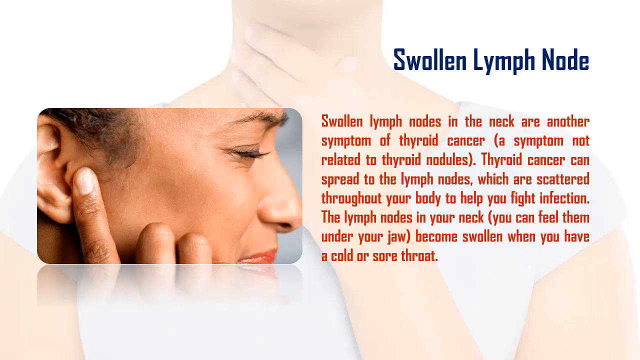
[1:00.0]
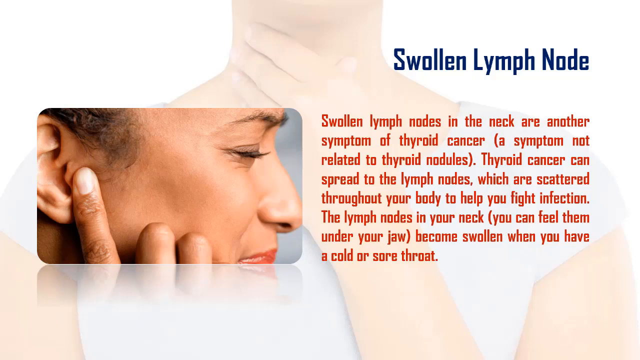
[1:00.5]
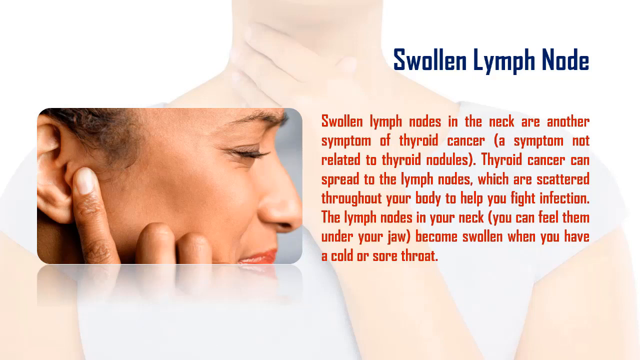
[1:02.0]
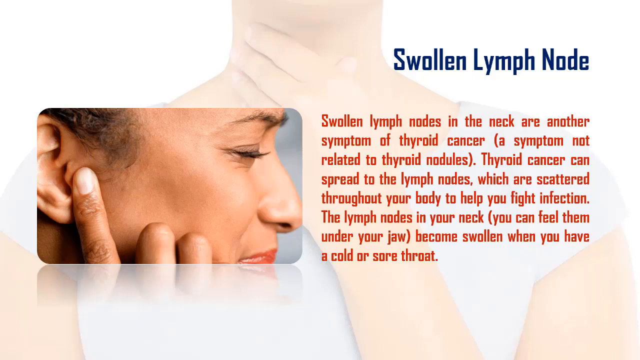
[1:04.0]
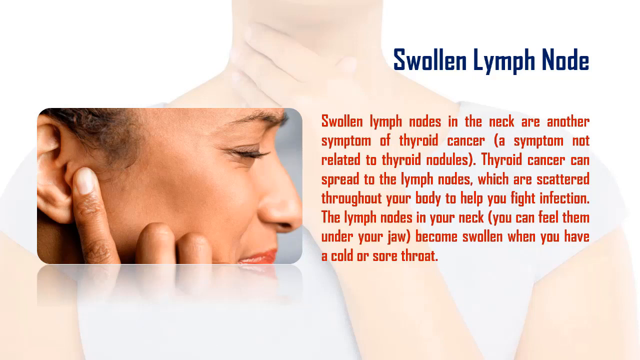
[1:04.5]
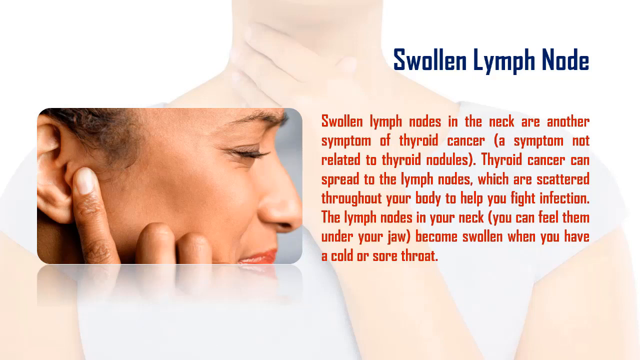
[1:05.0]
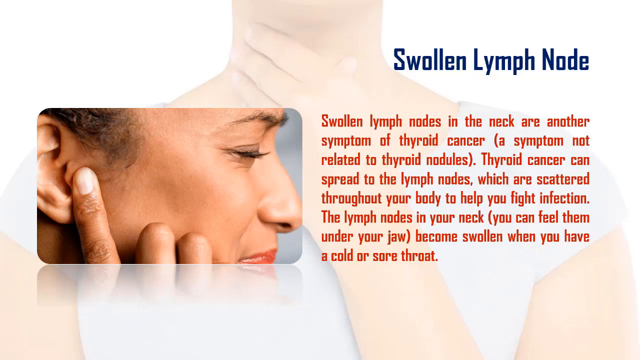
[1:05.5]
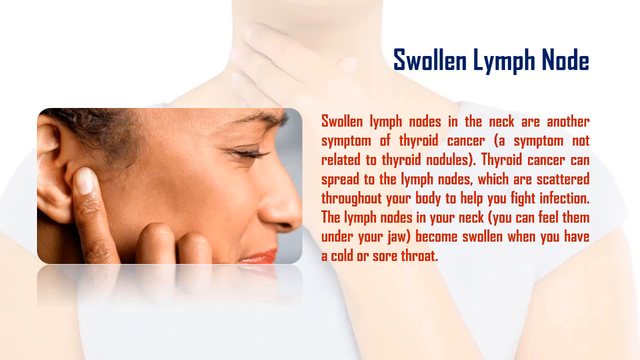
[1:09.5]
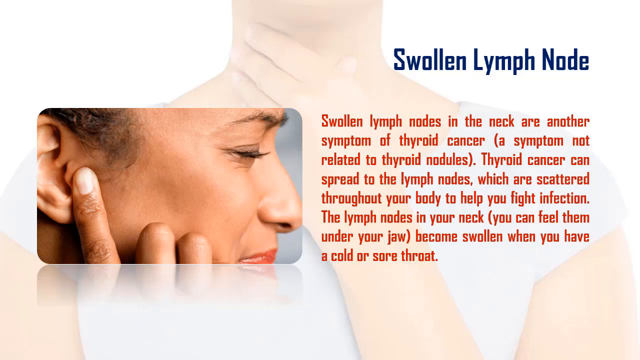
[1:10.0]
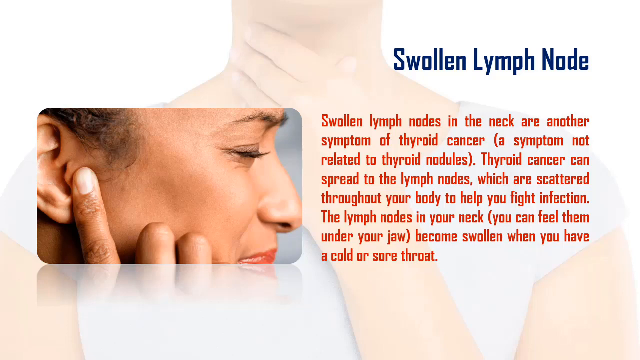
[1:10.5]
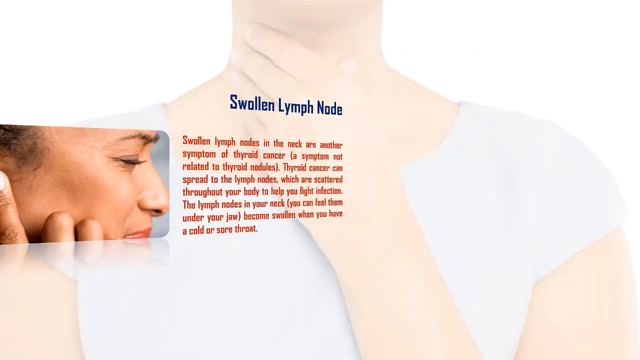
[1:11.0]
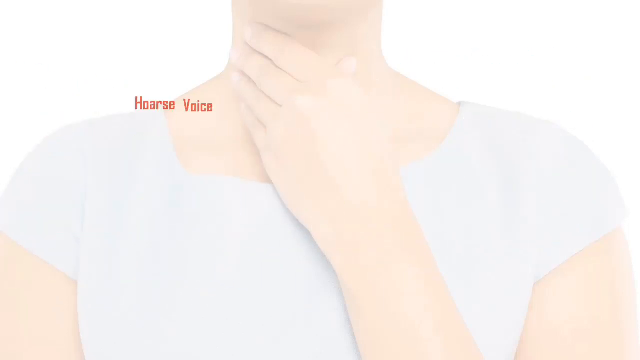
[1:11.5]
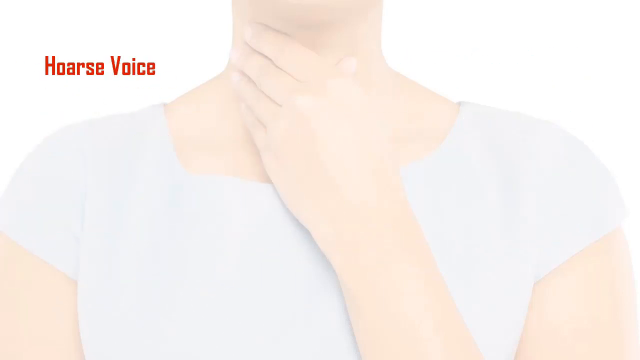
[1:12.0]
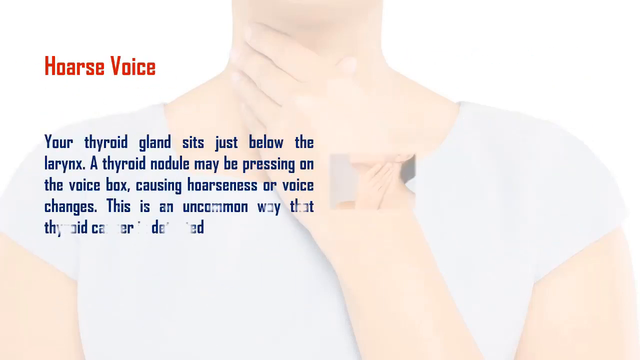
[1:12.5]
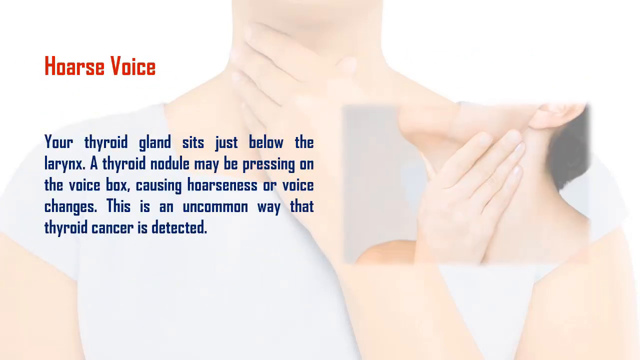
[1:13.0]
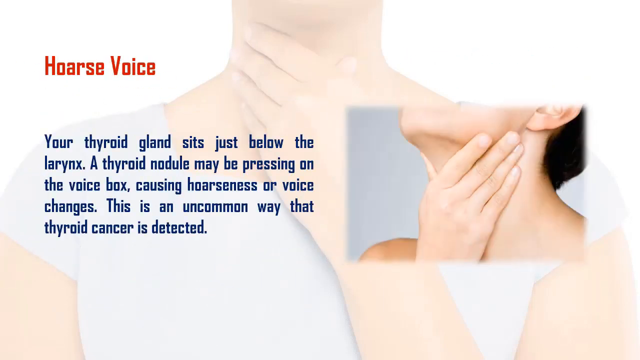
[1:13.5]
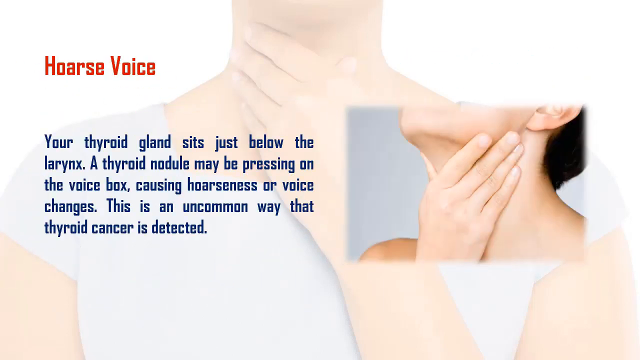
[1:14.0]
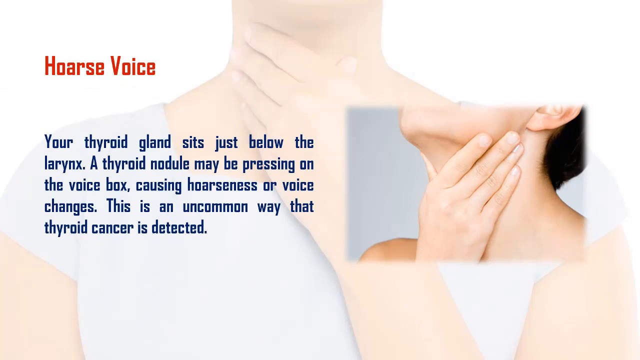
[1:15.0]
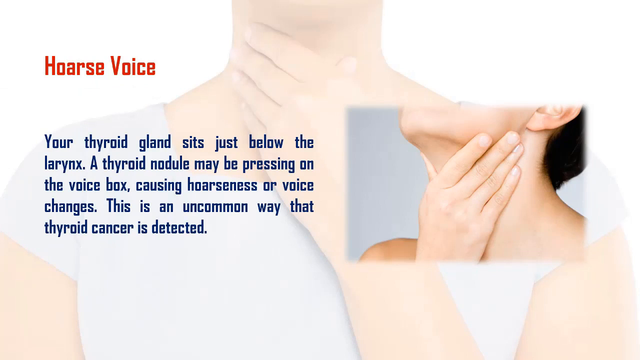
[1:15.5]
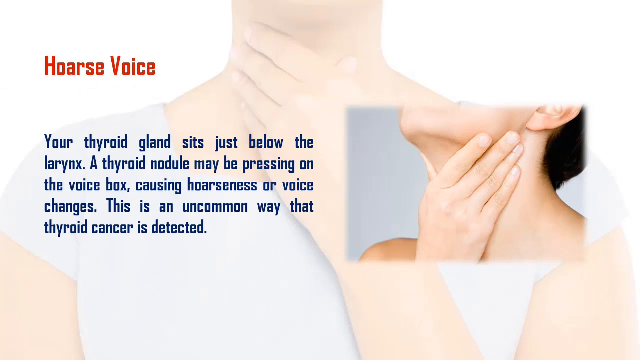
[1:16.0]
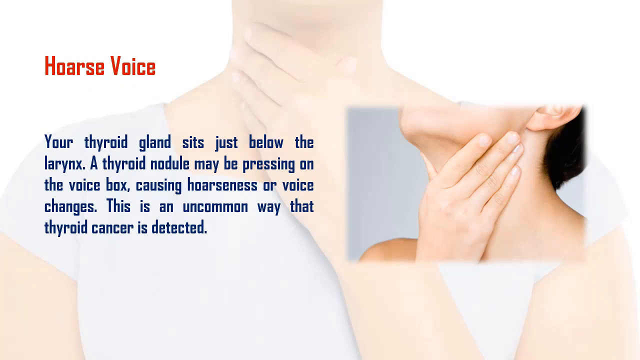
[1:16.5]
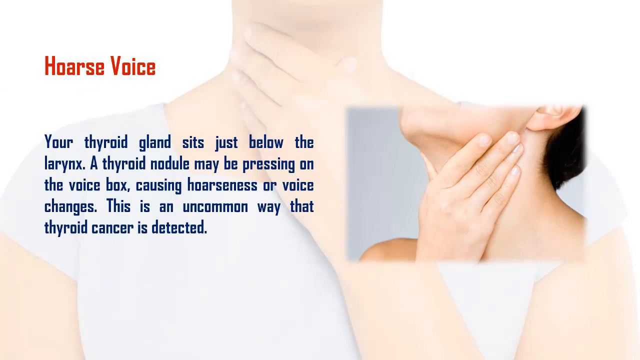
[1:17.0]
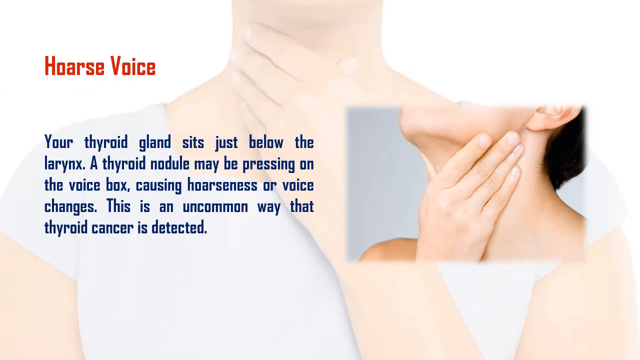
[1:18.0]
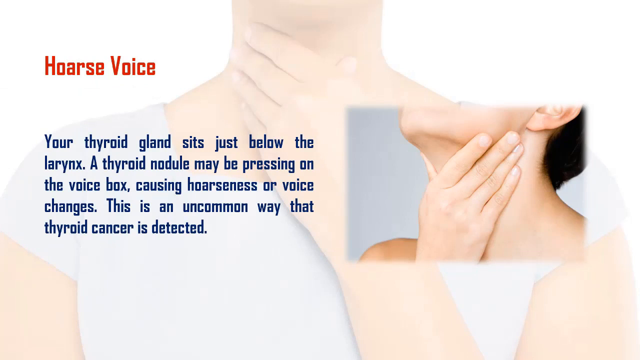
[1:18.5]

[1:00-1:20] In the Disease Facts video about thyroid cancer, a slide says "swollen lymph node" above red text reading: "Swollen lymph nodes in the neck are another symptom of thyroid cancer, a symptom not related to thyroid nodules. Thyroid cancer can spread to the lymph nodes which are scattered throughout your body to help you fight infection. The lymph nodes in your neck, you can feel them under your jaw, become swollen when you have a cold or sore throat." The African-American lady is to the left. The next slide says "hoarse voice" in red, and in blue: "your thyroid gland sits just below the larynx. A thyroid nodule may be pressing on the voice box, causing hoarseness or voice changes. This is an uncommon way that thyroid cancer is detected." To the right is a white lady touching her neck with her right hand. Her head is angled up, and her hand, held up under her neck, forms a kind of V shape between her thumb and the rest of her fingers.